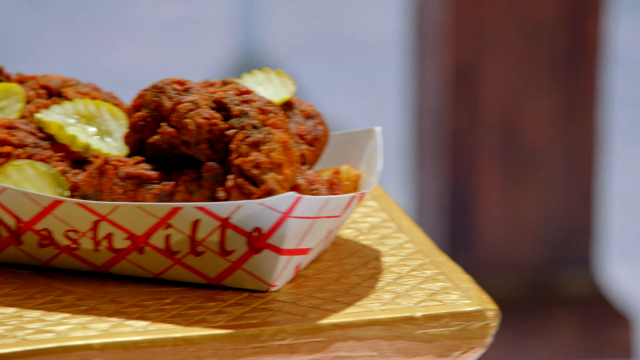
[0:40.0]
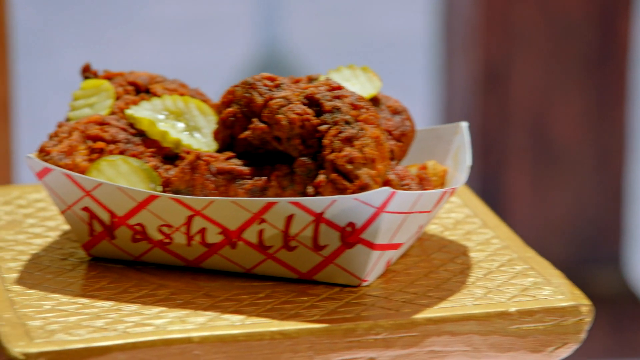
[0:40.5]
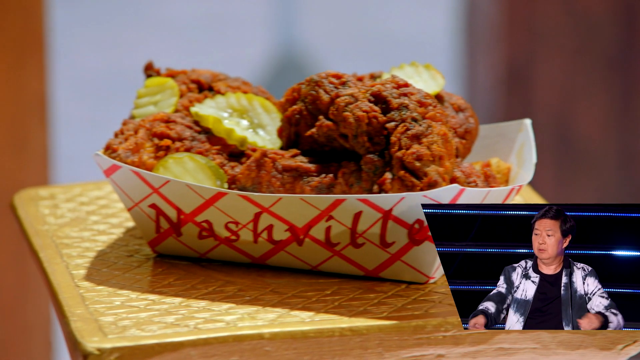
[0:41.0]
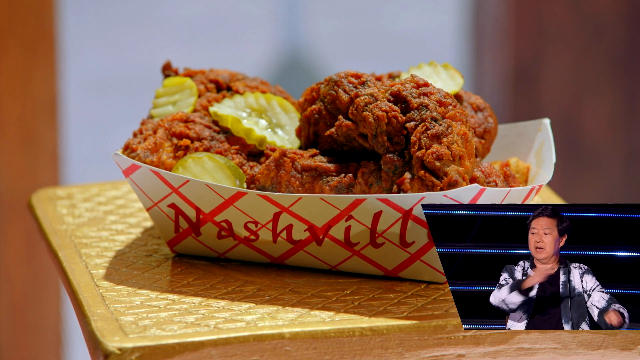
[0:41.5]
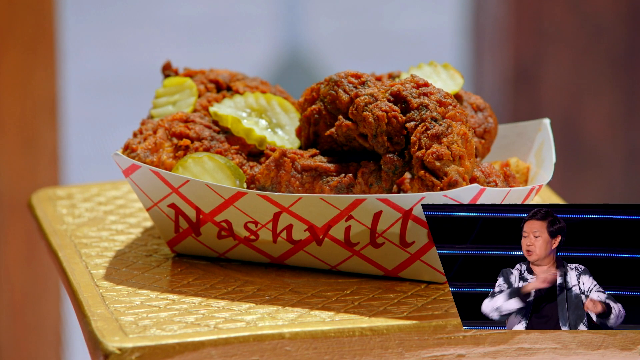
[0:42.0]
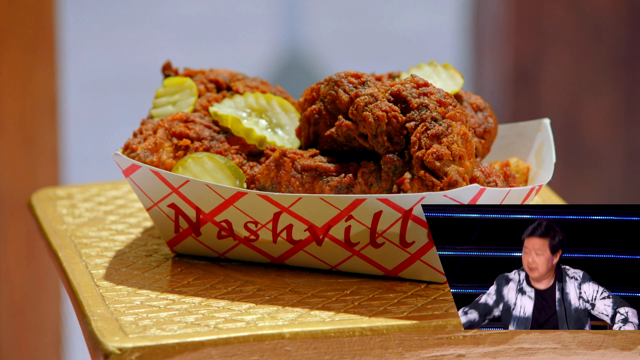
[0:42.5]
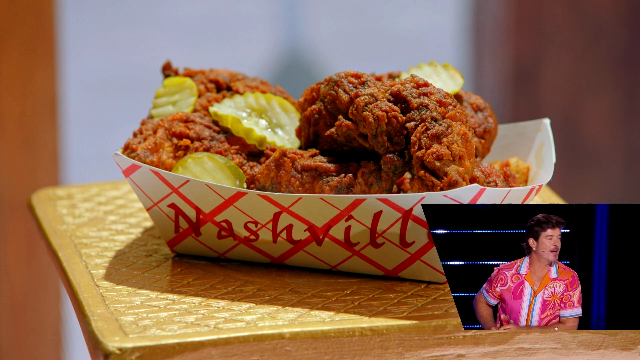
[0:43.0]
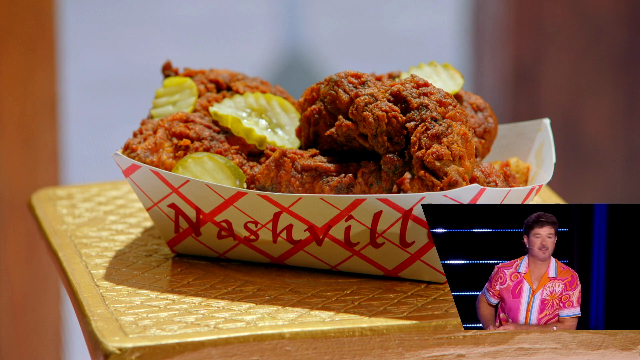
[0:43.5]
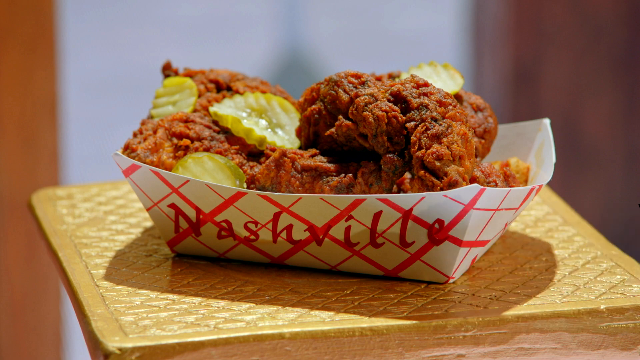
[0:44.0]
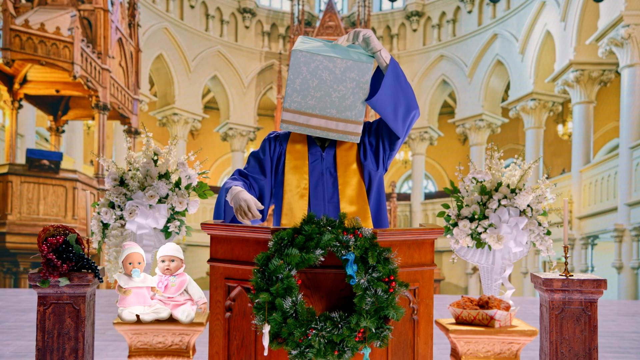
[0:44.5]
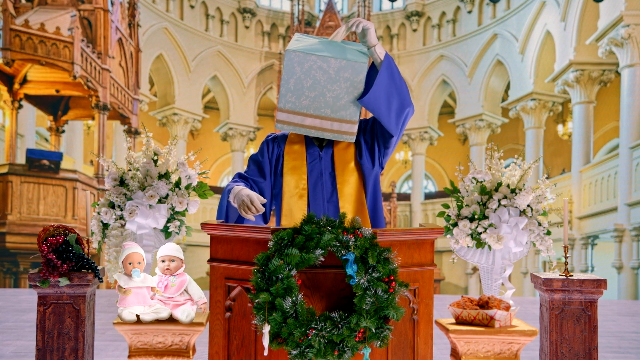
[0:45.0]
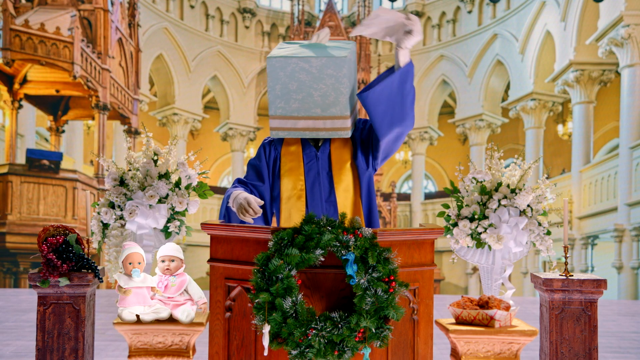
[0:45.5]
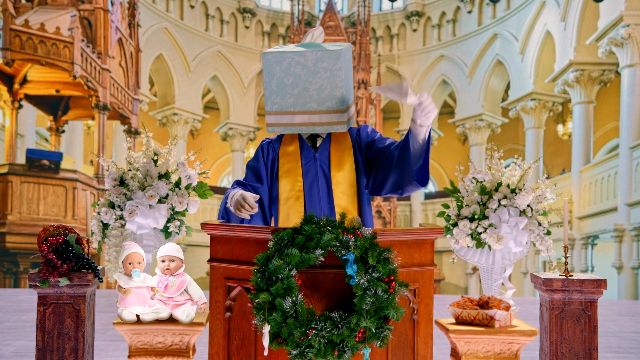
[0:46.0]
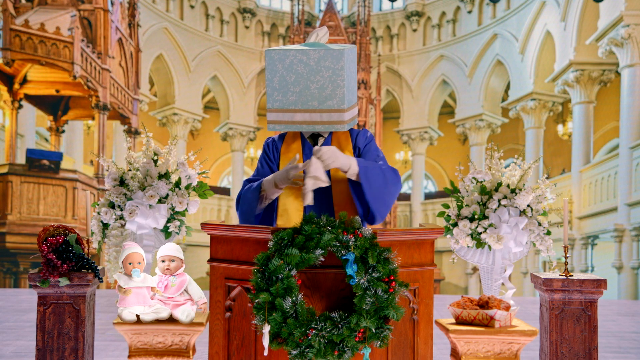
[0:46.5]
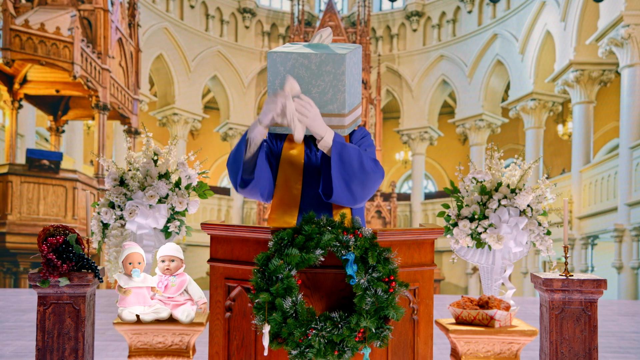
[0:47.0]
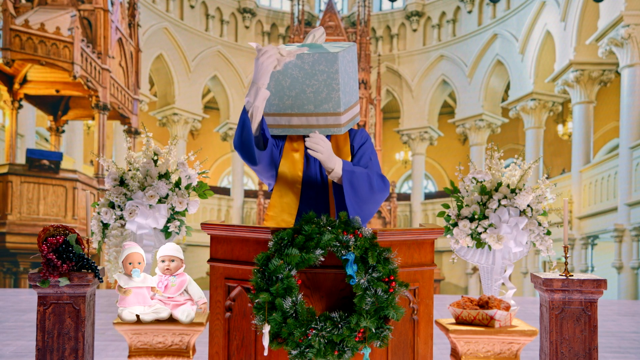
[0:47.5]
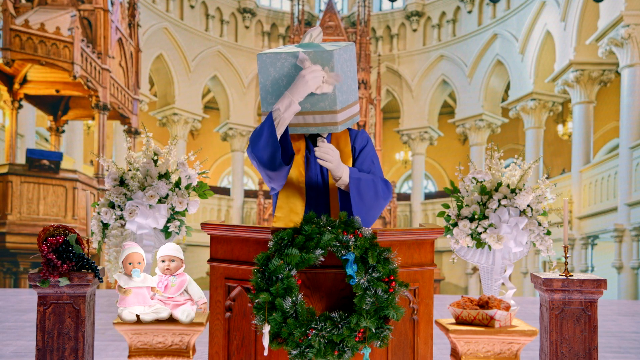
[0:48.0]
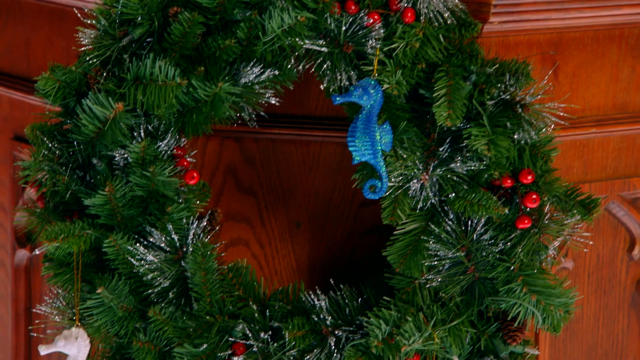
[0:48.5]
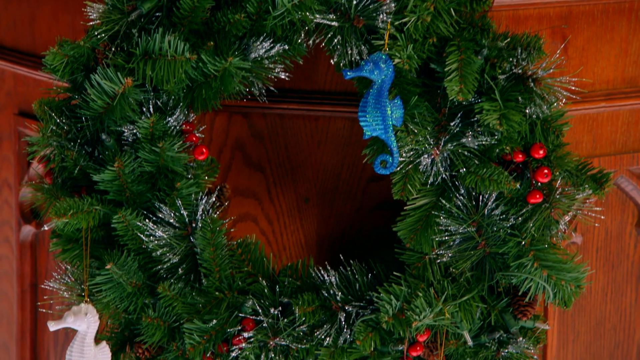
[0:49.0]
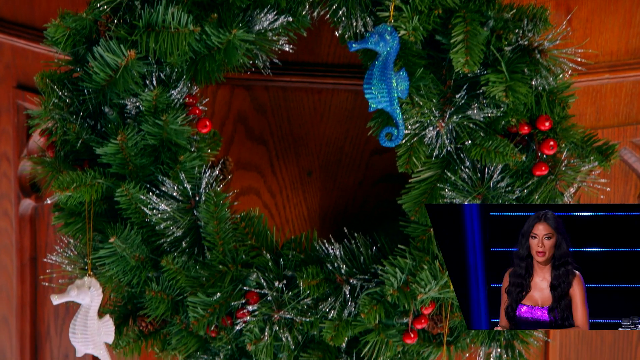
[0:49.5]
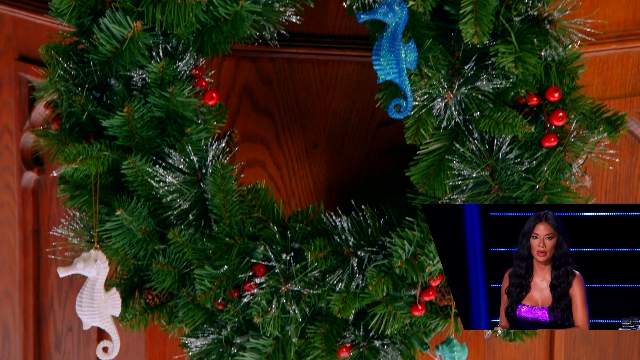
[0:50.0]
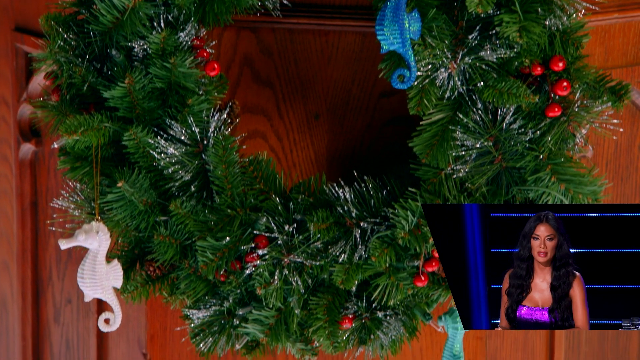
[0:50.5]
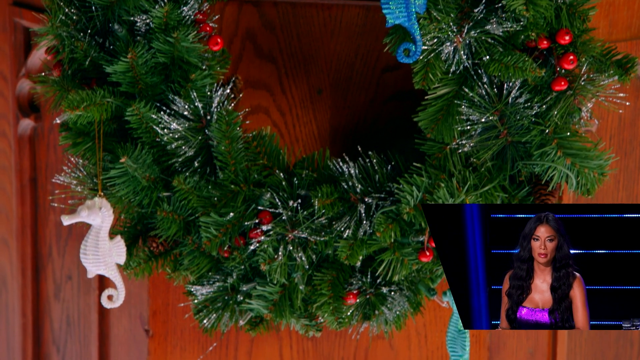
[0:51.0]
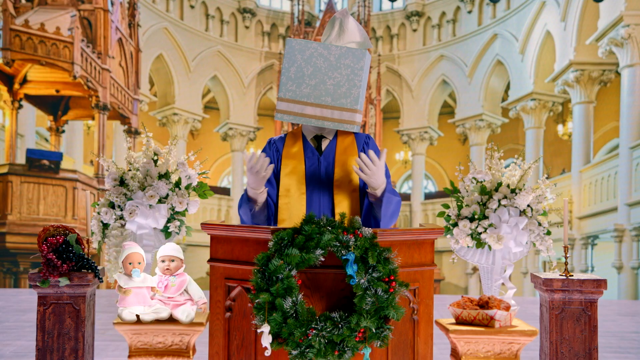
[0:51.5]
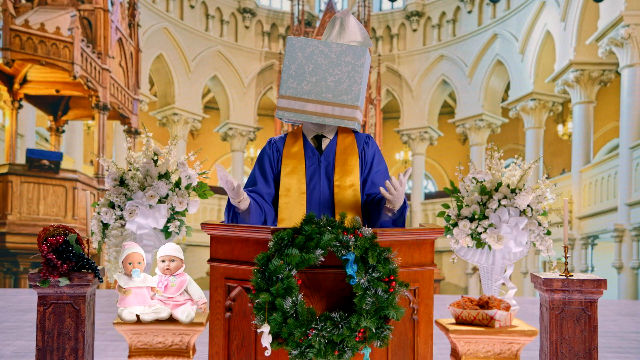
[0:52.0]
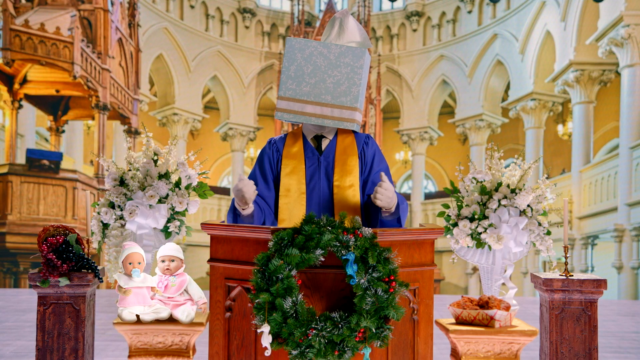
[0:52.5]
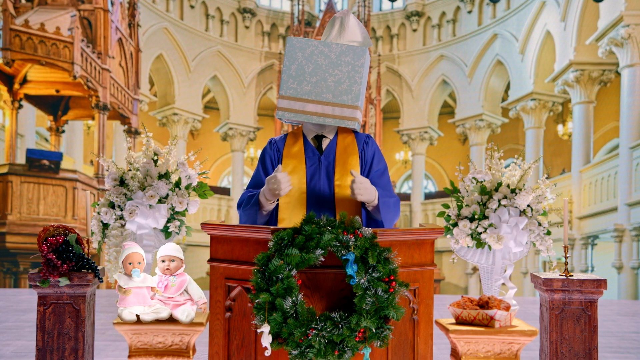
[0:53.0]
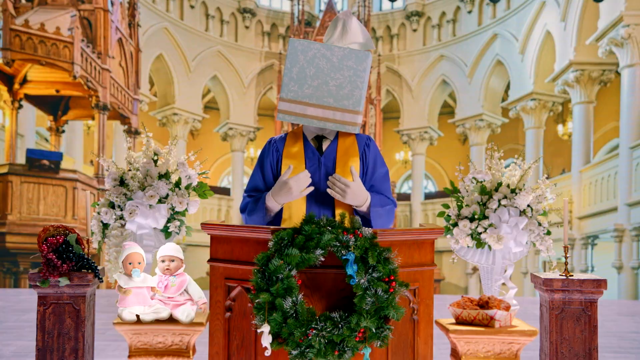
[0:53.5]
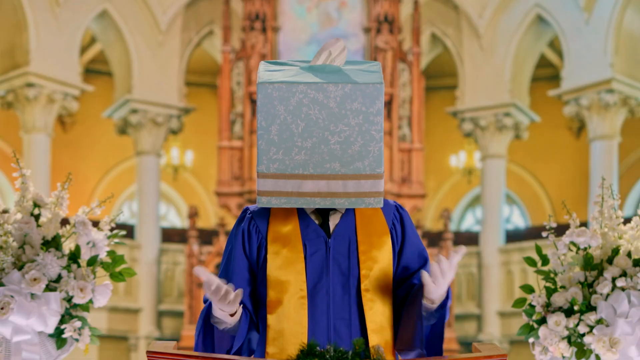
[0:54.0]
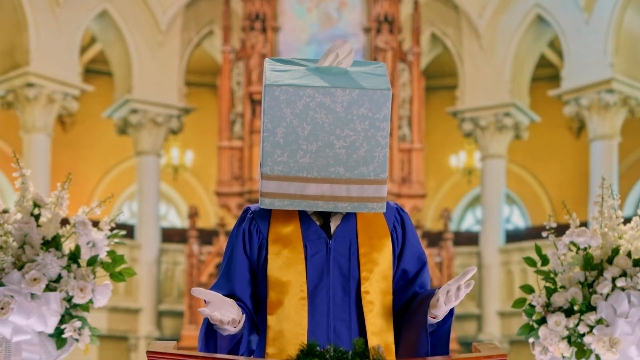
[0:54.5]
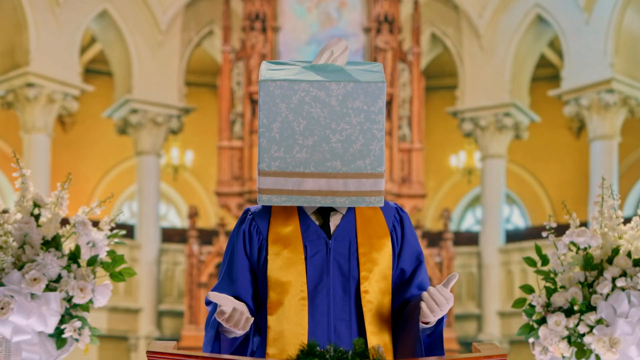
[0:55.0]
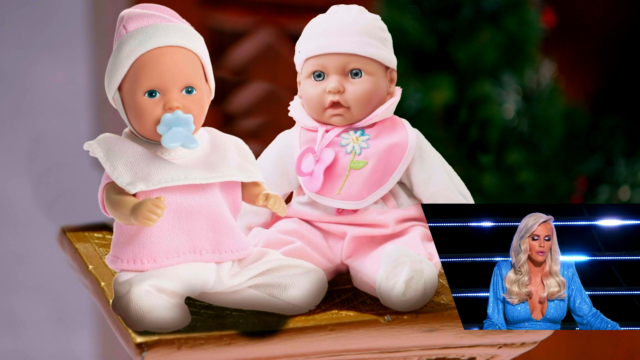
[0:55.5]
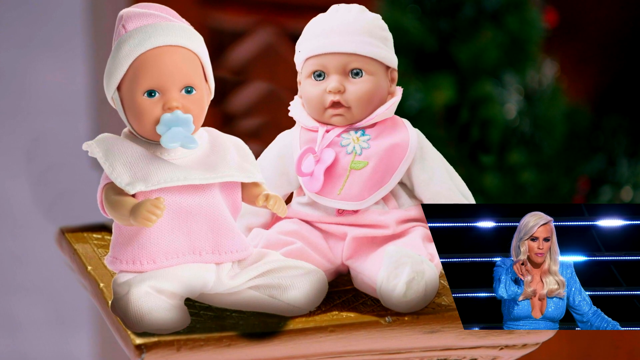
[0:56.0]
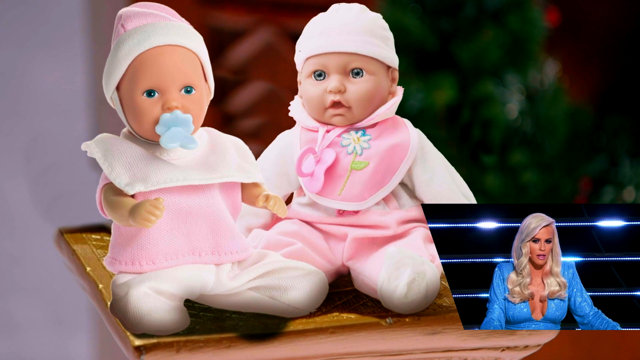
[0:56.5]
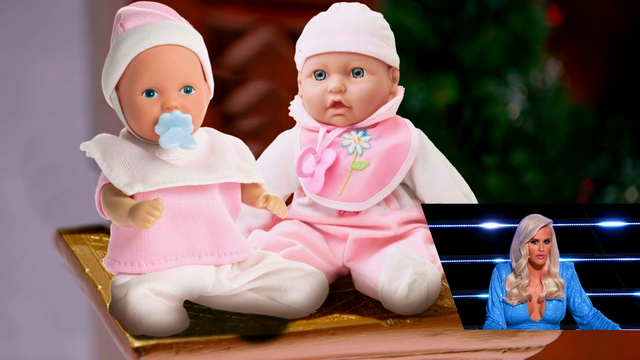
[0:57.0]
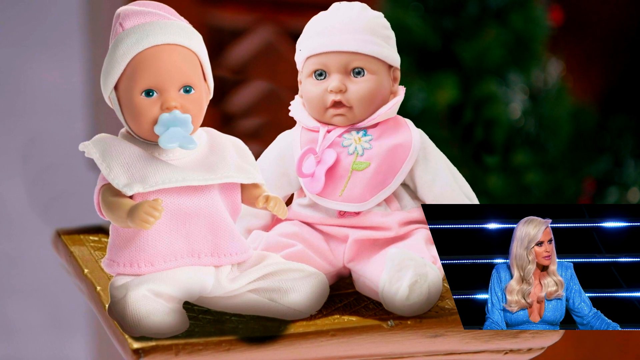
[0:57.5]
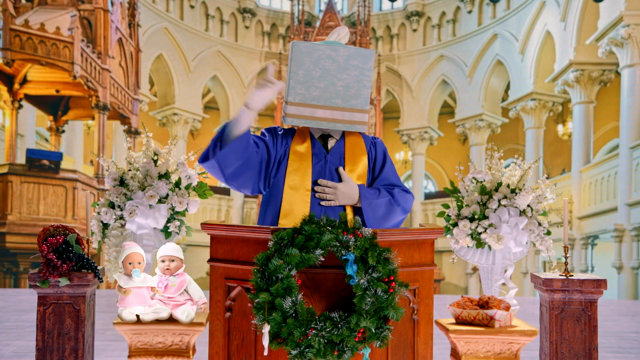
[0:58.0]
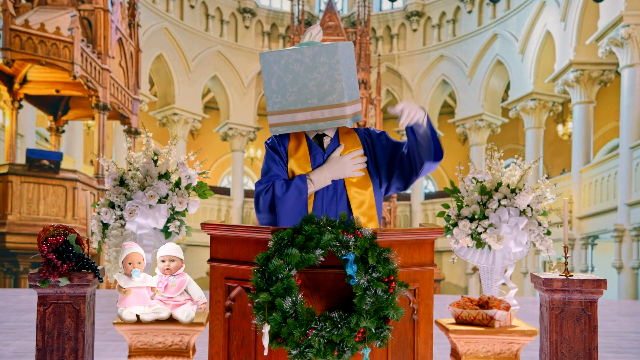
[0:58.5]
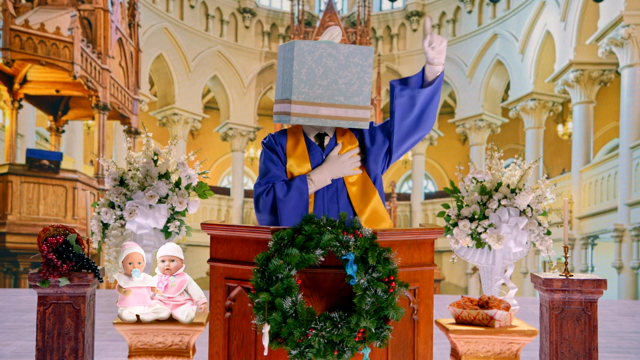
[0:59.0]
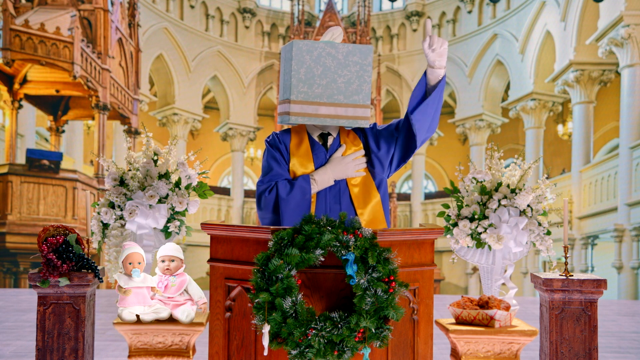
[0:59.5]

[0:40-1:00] Some sort of chicken takeaway from Nashville is shown in a white and red container. The chicken looks delectable, with what may be cucumbers or grated cucumbers, or some sort of lemon, on top. It is shown slowly. A Chinese man appears at the bottom of the screen against a black and blue background with small blue lines. He has black hair and wears a black and white jacket over a black t-shirt, and he is explaining something to a man in a pink t-shirt that looks like a summer t-shirt. The video goes back to the priest in blue and yellow, who has a tissue box on his head. Christmas decorations with some sort of seahorses are shown, and behind him are small baby dolls wearing white; seemingly the girl doll is pinkish and the boy doll is blue. The priest is explaining something, and the dolls are shown up close.